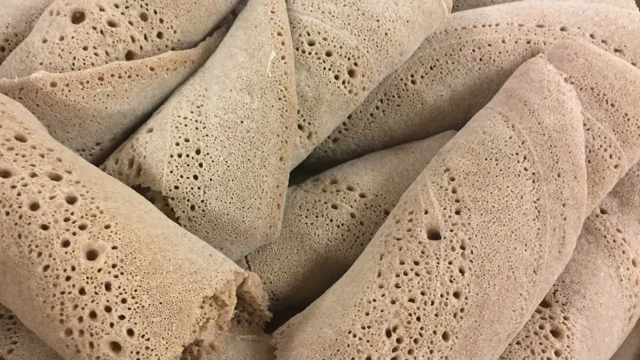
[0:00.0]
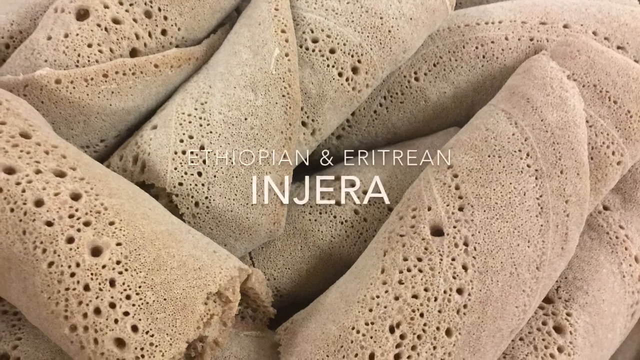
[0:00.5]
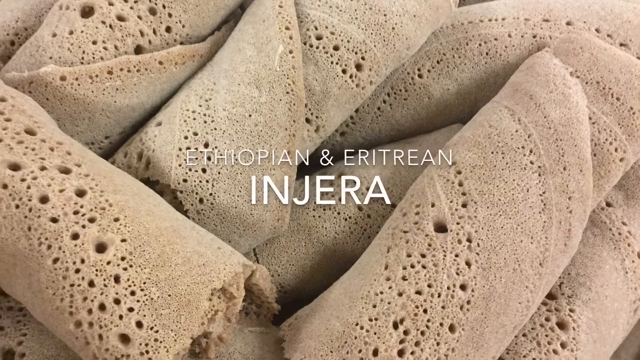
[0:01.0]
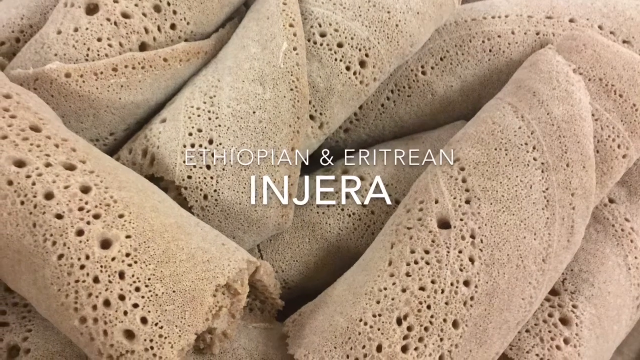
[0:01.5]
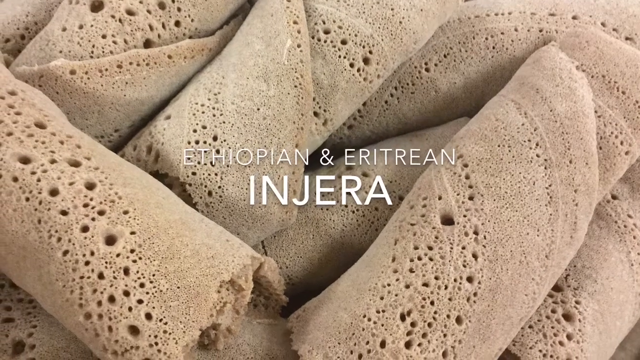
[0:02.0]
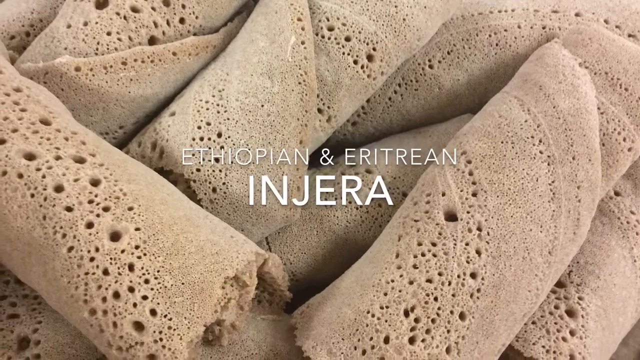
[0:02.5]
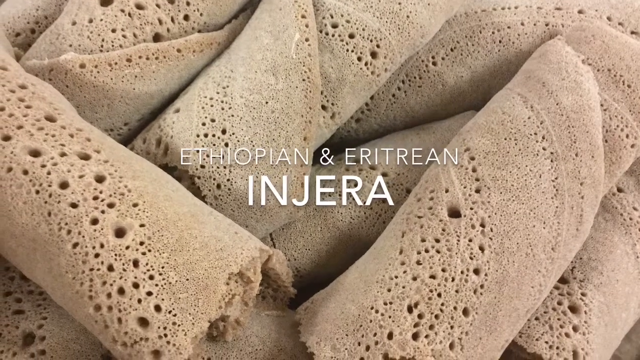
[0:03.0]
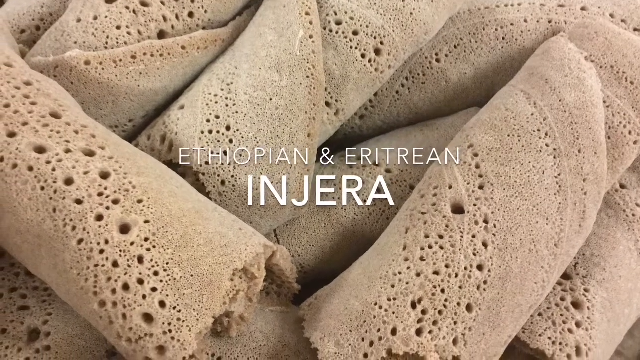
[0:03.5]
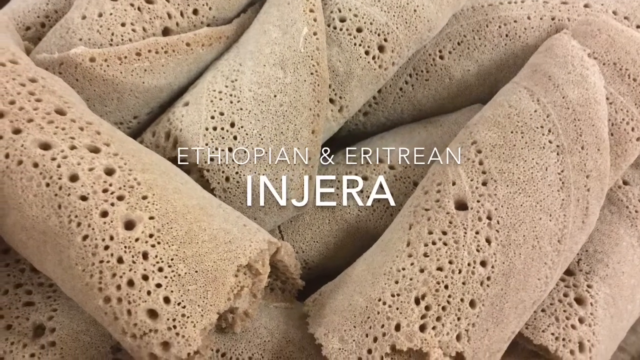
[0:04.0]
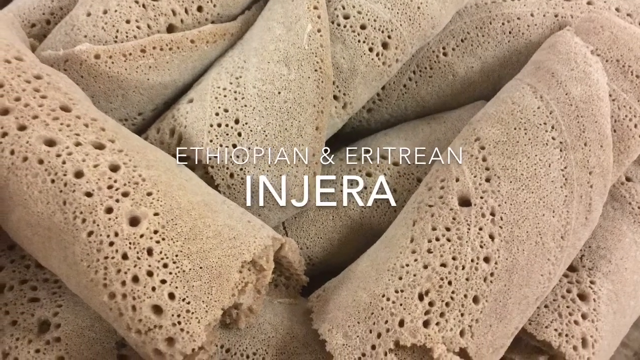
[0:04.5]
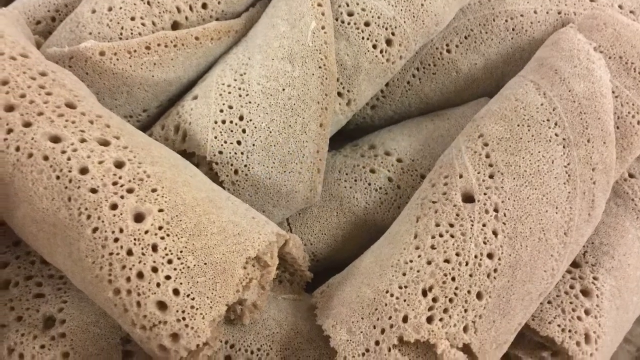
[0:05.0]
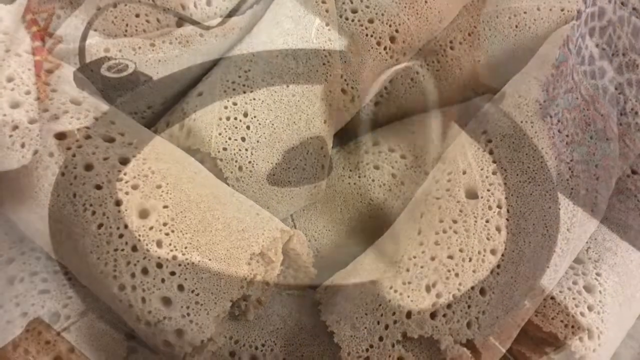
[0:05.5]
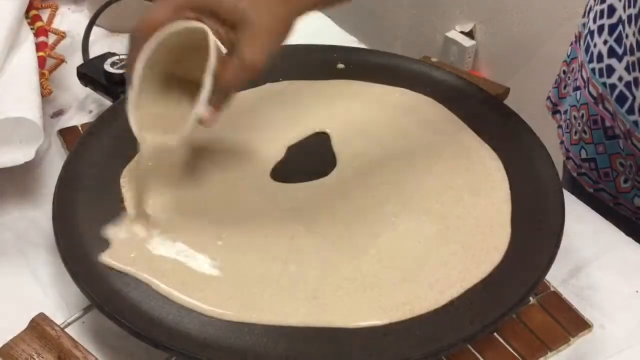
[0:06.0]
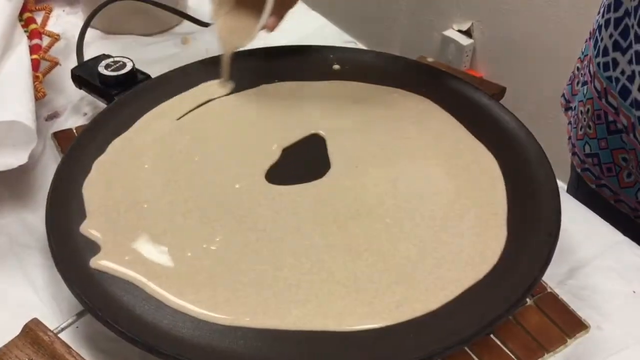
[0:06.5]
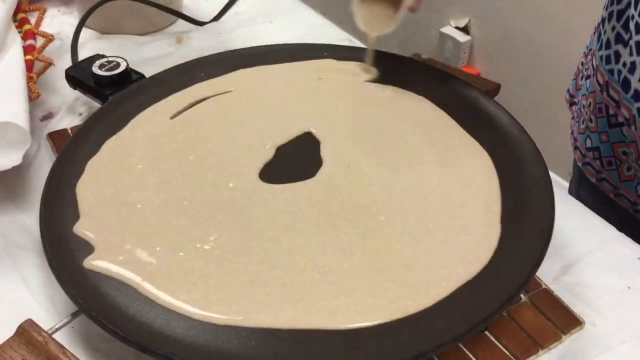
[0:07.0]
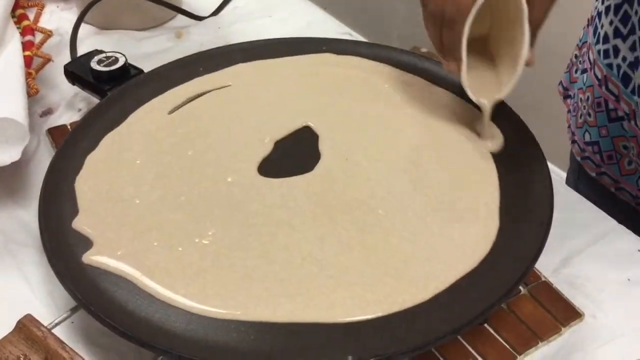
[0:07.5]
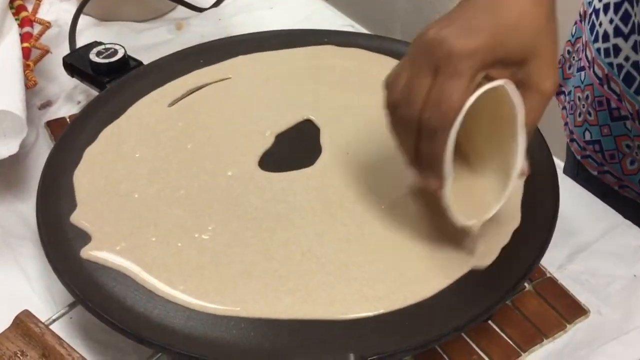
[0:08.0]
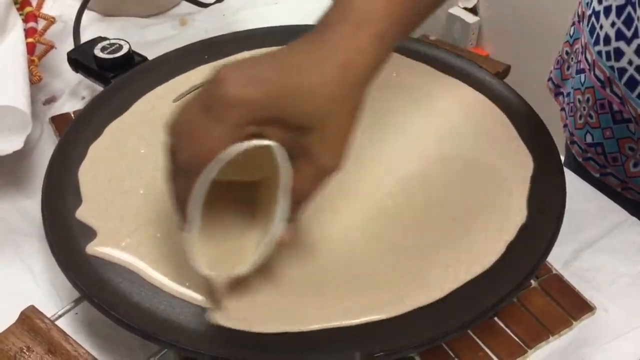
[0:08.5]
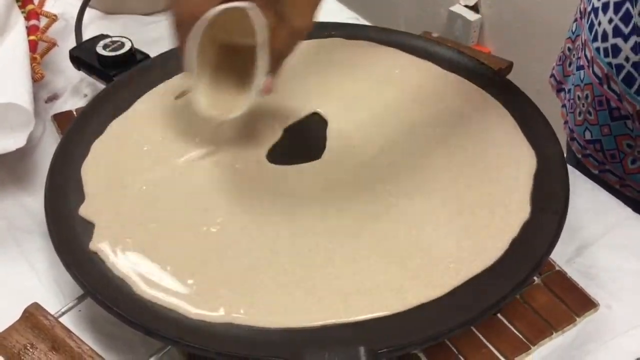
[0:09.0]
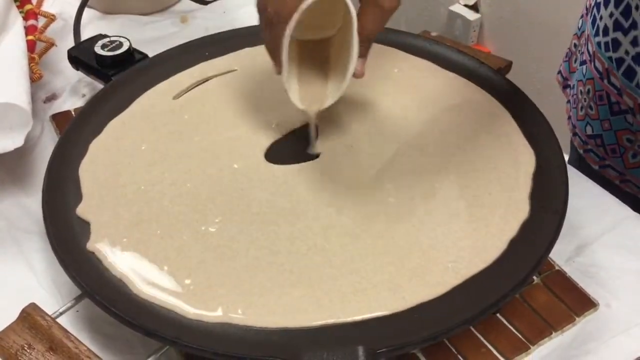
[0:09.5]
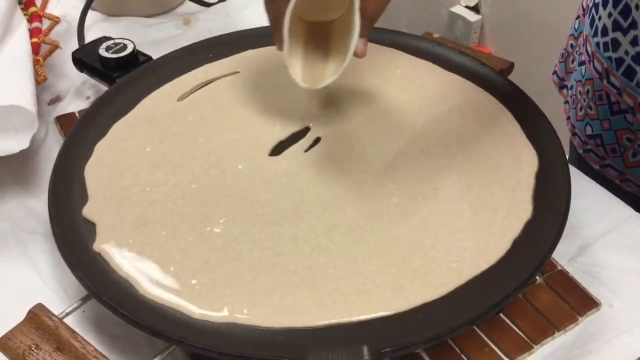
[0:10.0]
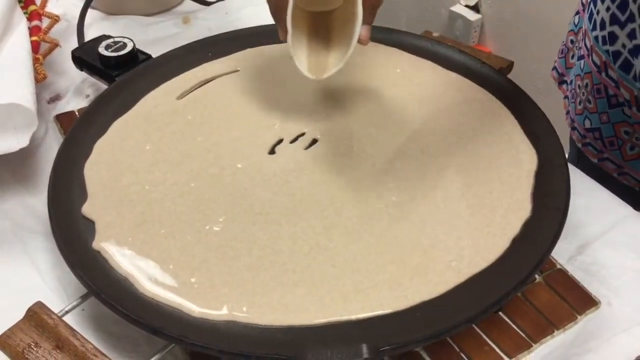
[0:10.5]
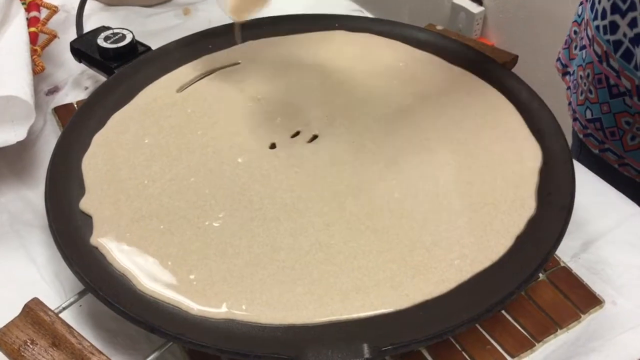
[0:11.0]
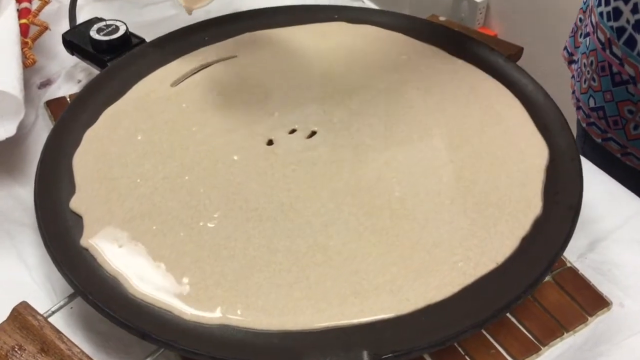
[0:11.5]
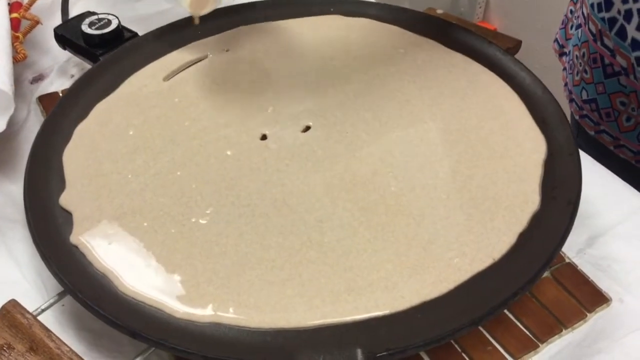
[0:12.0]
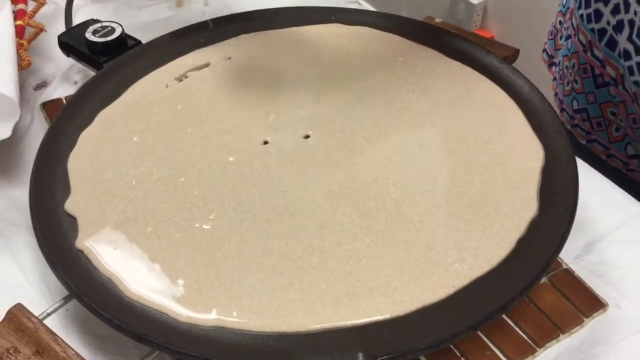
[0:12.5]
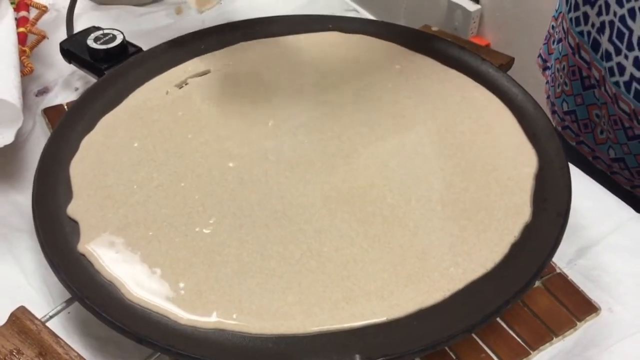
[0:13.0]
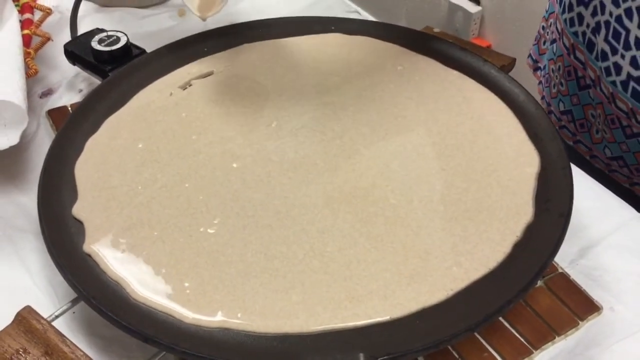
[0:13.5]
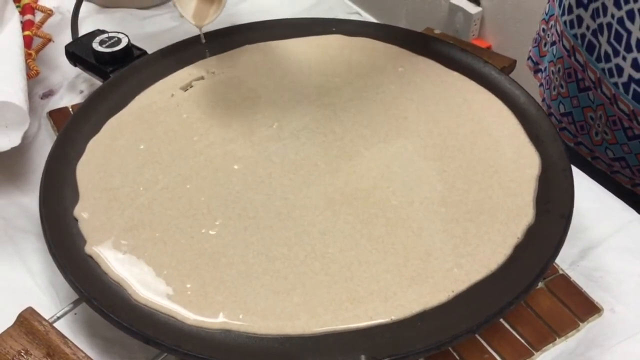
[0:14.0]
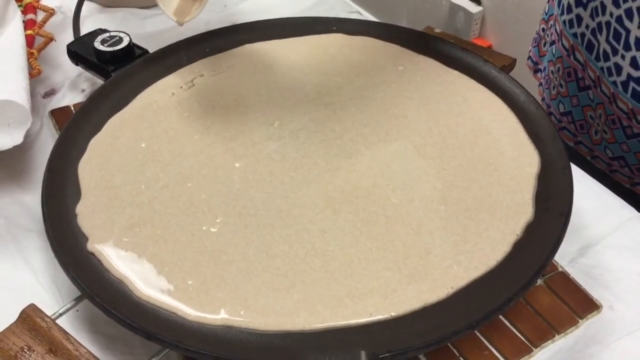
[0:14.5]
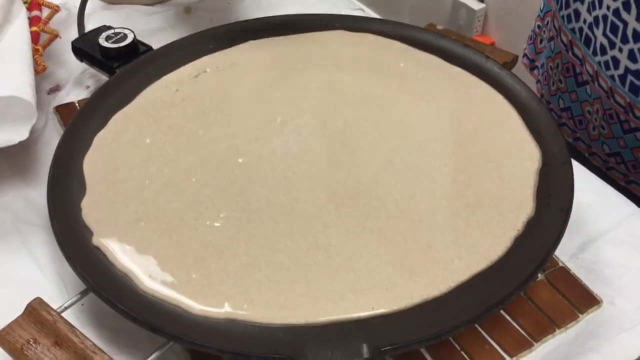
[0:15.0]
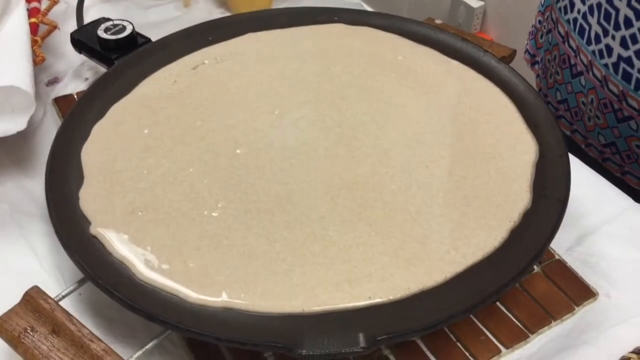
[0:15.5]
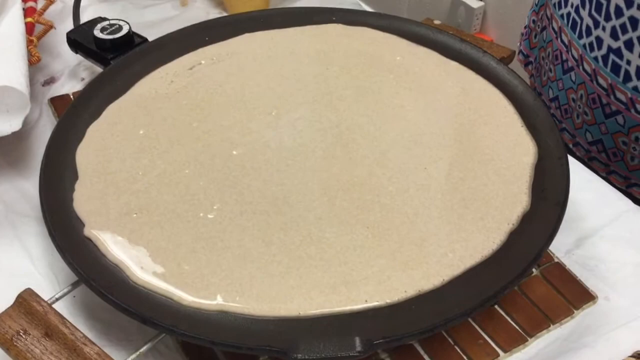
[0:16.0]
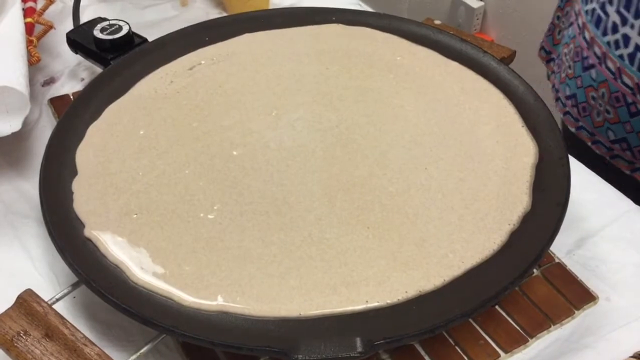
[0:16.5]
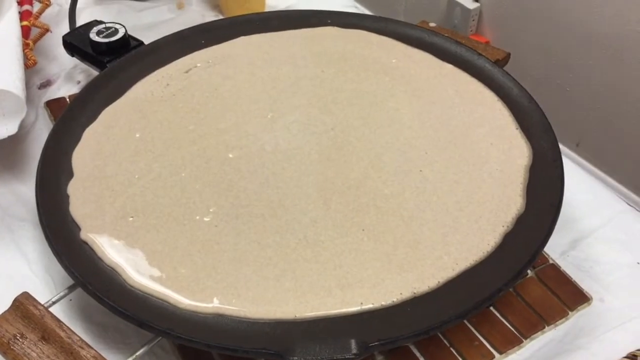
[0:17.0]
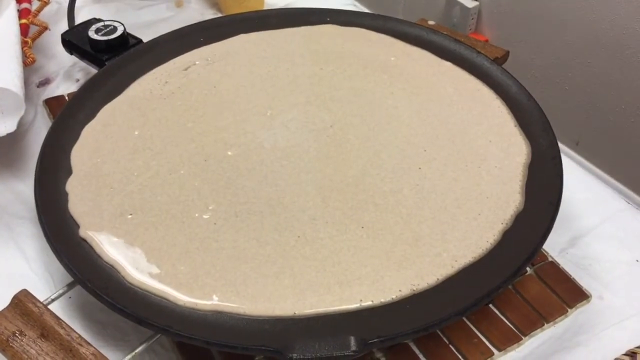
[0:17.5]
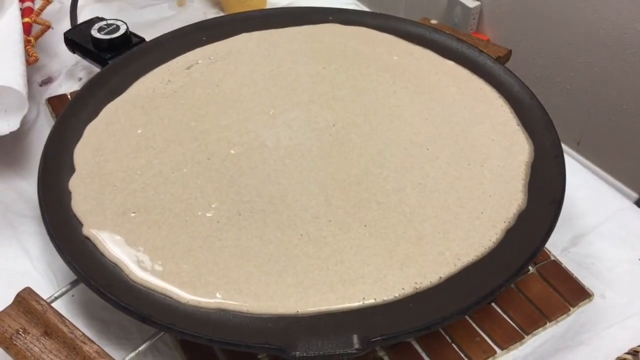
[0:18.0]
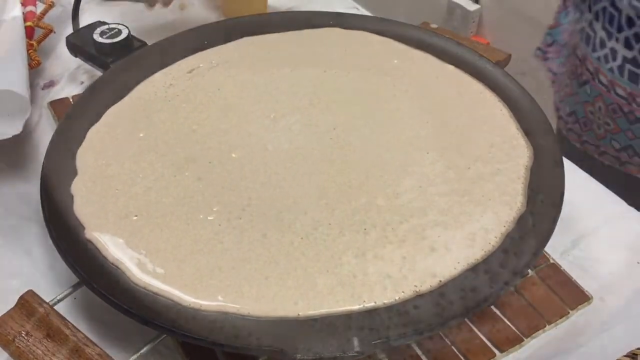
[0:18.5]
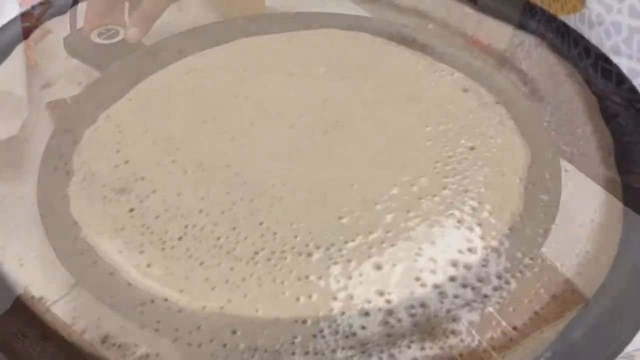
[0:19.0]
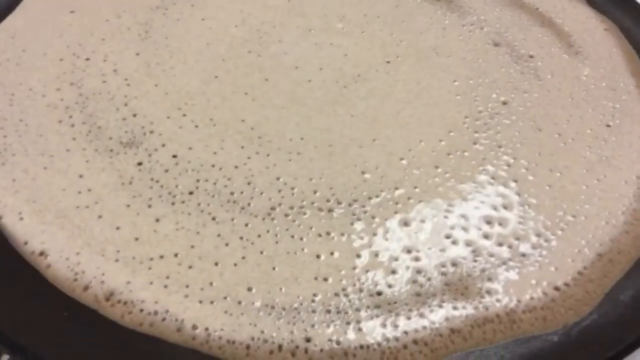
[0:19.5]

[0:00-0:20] This food and cooking video opens with text in the centre of the screen reading "Ethiopian and Eritrean injera", with injera spelled I-N-J-E-R-A. At the start there is a photo of the food, which looks like a kind of flour-based tortilla wrap with holes in it, a bit like a pancake; about 10 of them are rolled up. The video scrolls slowly toward the top right. Next, a woman is shown with an electric hot plate in the middle of the screen, on a white desk or table. Using a paper cup folded into an oval shape, she pours a flour mixture in a concentric circle around the edges of the hot plate, creating a flat circular layer with a hole in the middle, which she fills in at the end. Small holes appear in the top of the cooking material, and she drips the final drops of liquid to fill the gaps, forming a pancake layer of flour and water on the surface of the hot plate.